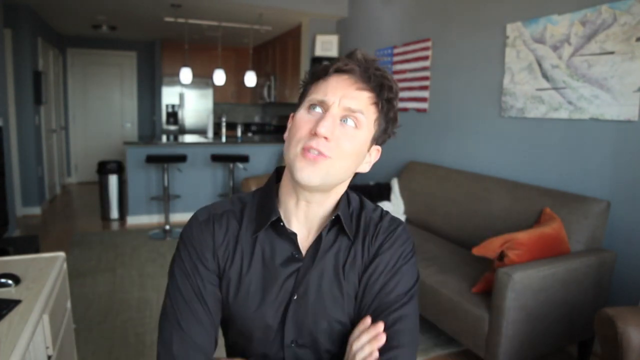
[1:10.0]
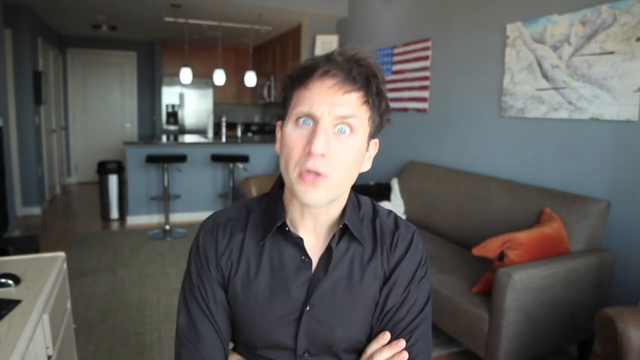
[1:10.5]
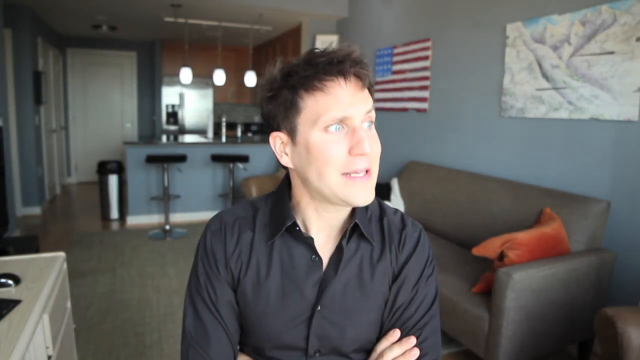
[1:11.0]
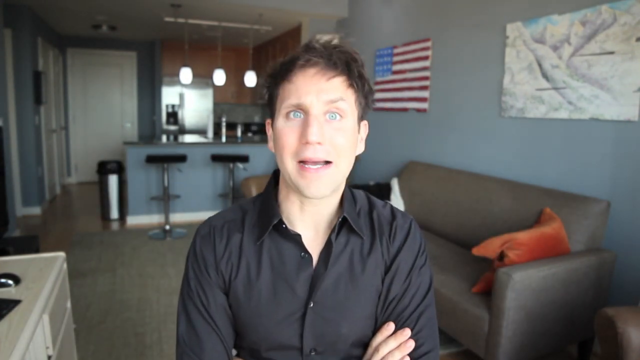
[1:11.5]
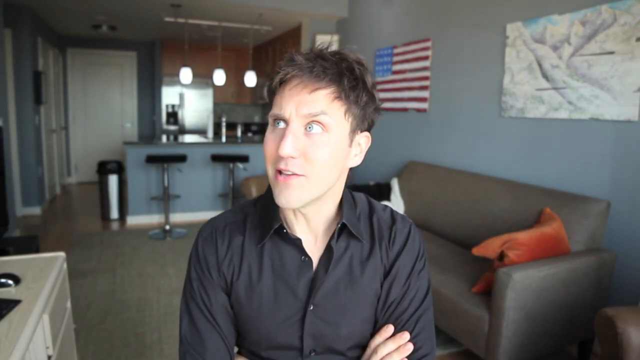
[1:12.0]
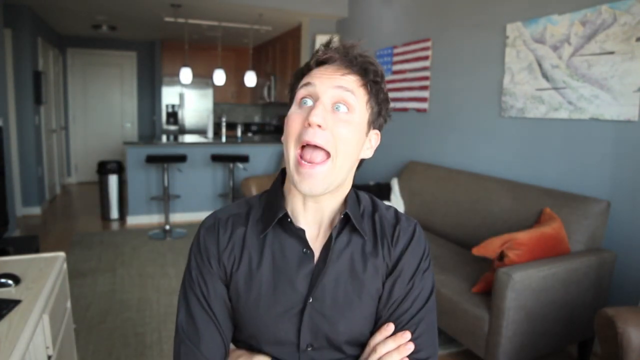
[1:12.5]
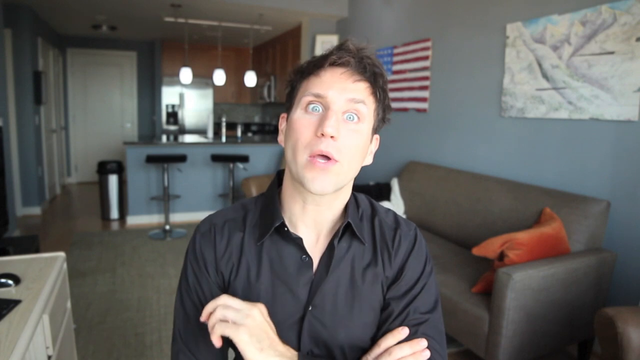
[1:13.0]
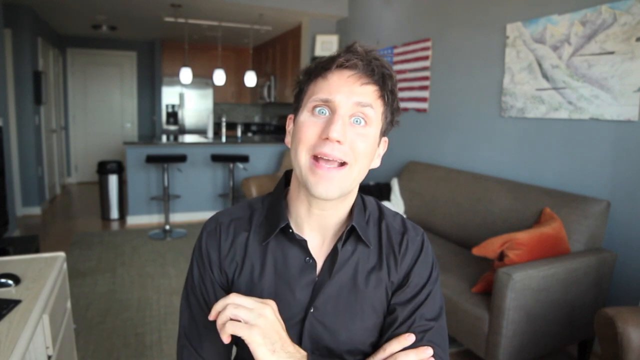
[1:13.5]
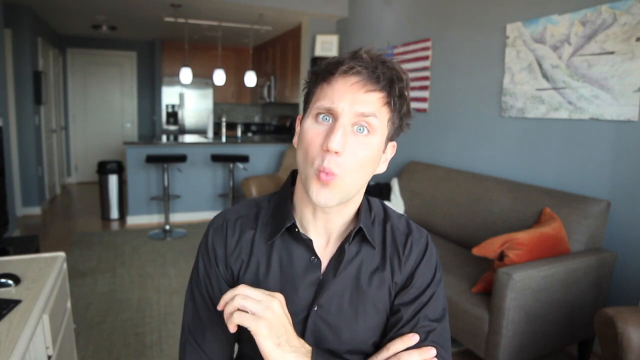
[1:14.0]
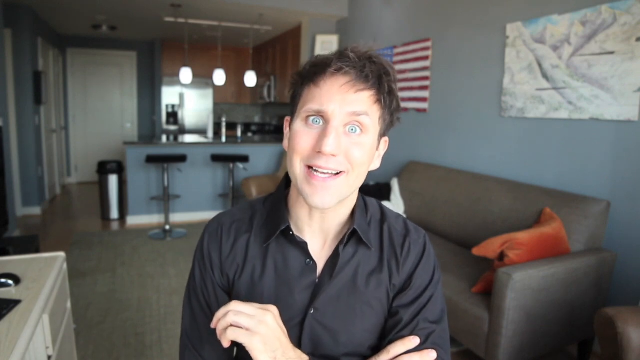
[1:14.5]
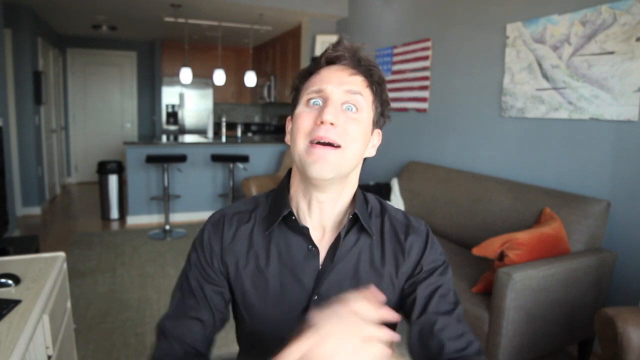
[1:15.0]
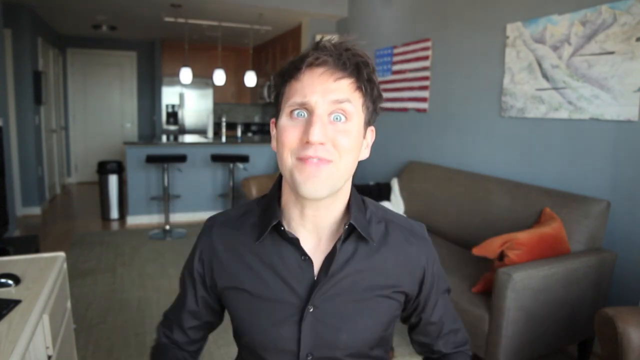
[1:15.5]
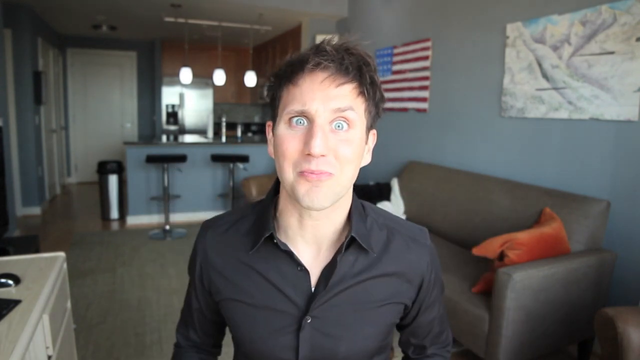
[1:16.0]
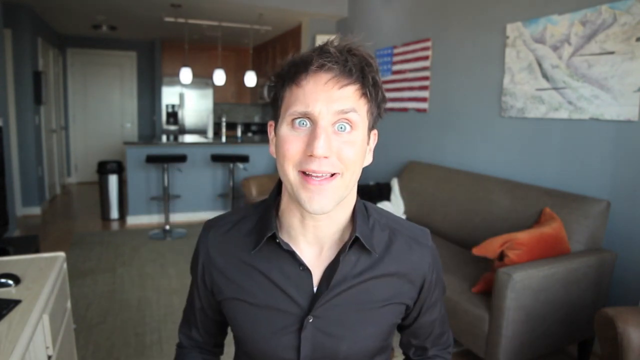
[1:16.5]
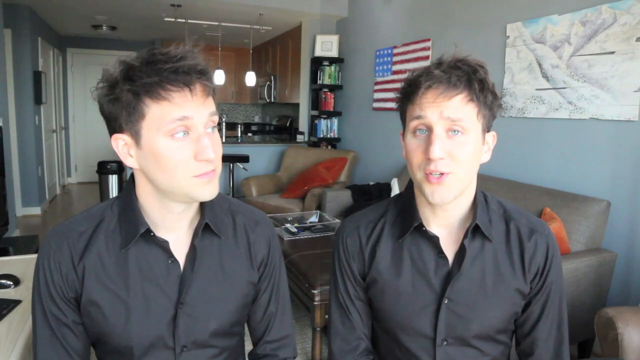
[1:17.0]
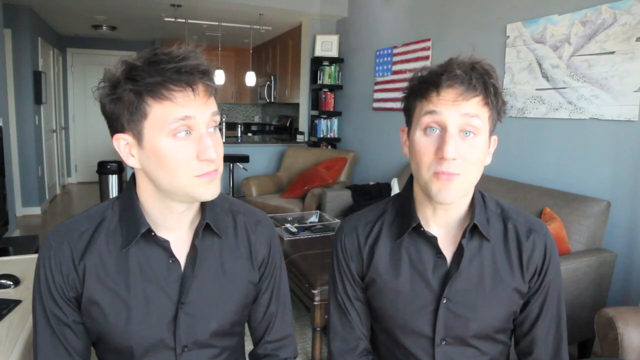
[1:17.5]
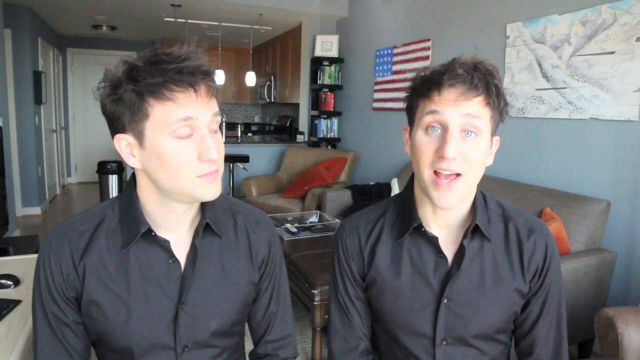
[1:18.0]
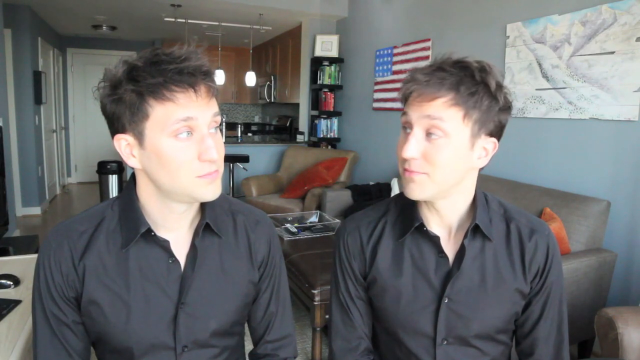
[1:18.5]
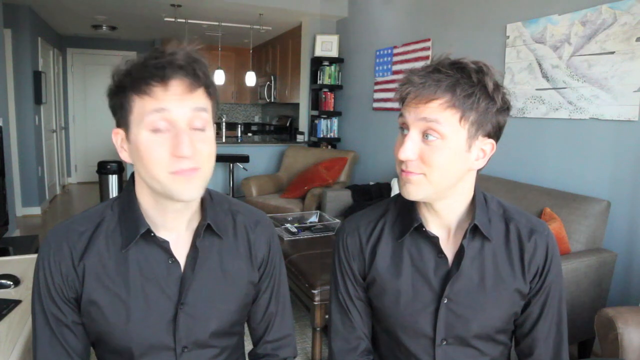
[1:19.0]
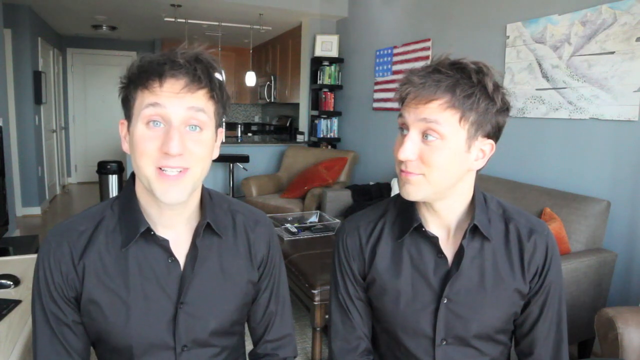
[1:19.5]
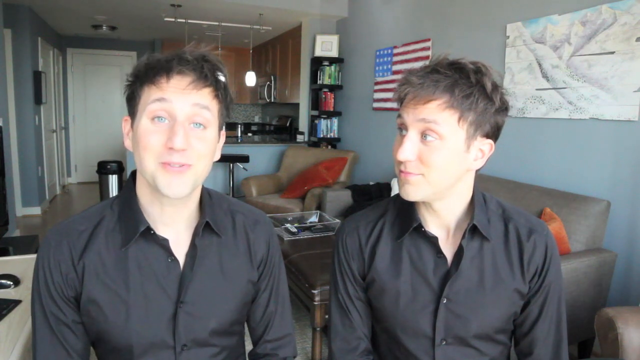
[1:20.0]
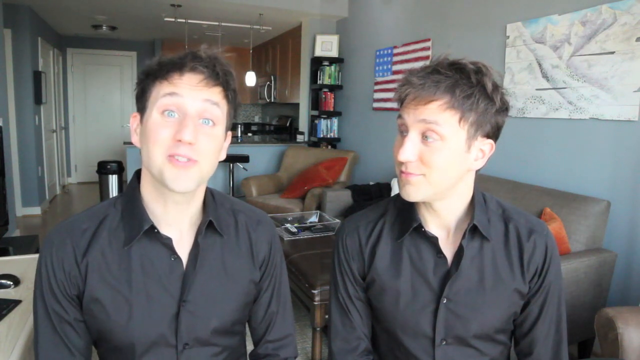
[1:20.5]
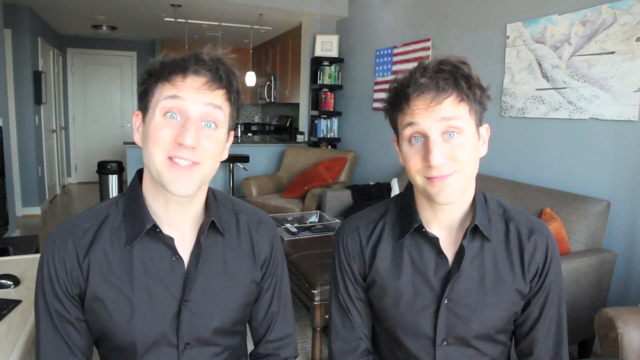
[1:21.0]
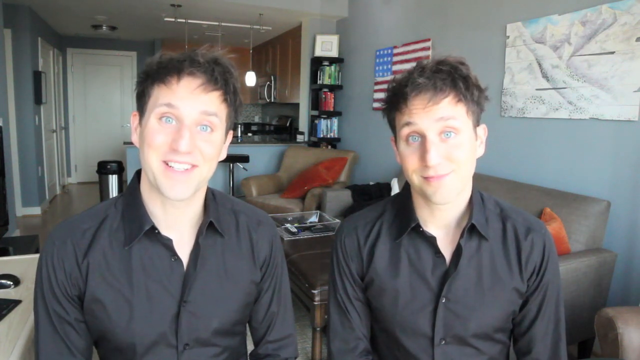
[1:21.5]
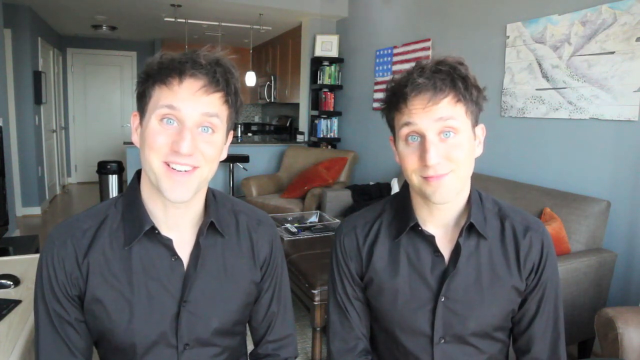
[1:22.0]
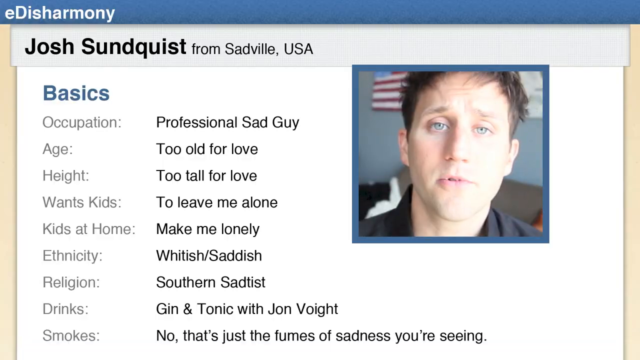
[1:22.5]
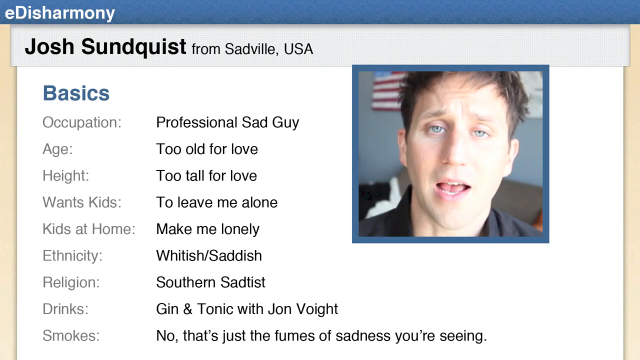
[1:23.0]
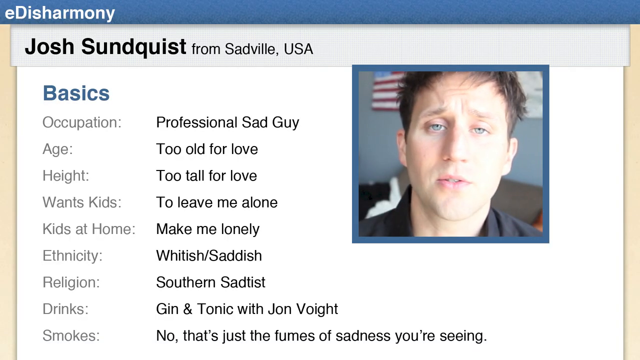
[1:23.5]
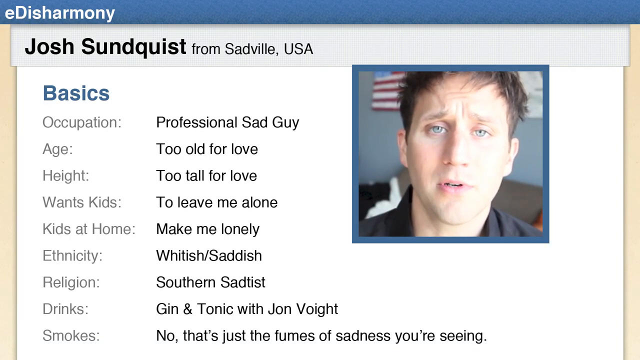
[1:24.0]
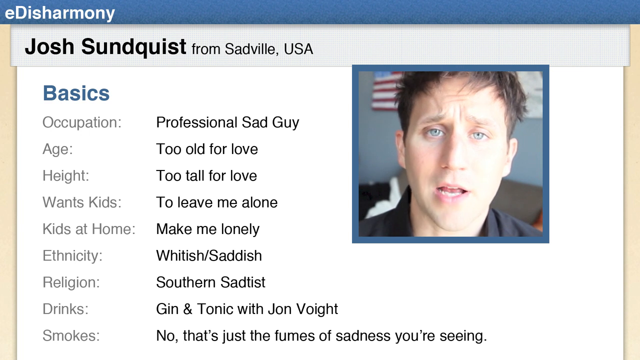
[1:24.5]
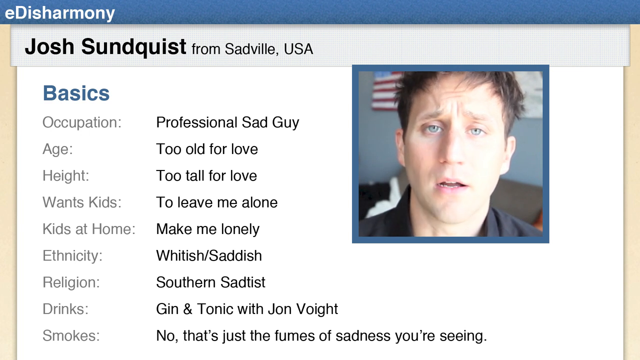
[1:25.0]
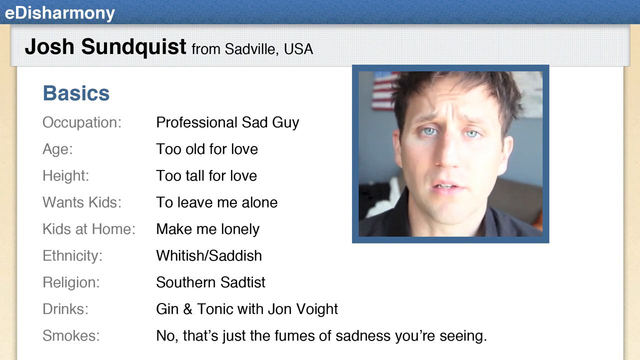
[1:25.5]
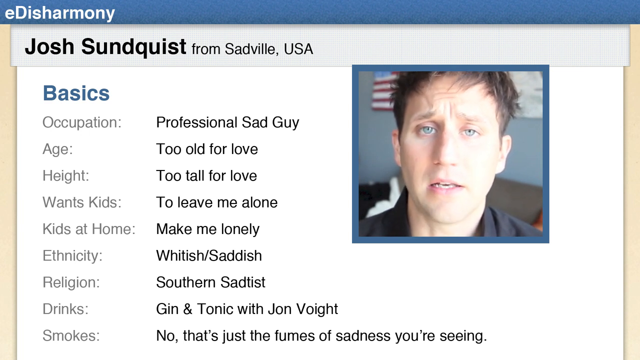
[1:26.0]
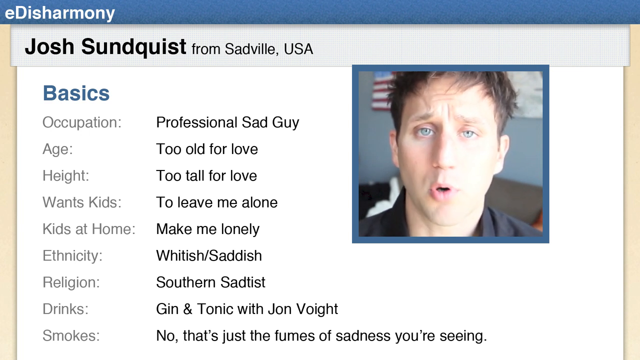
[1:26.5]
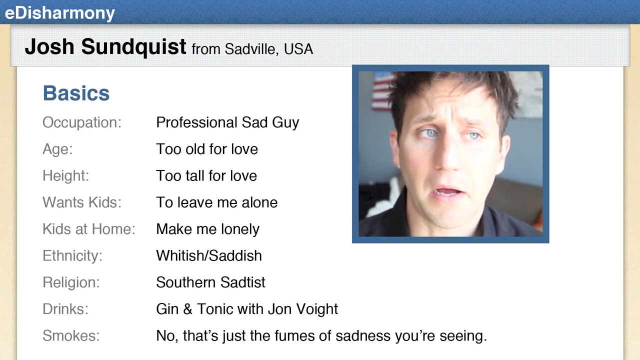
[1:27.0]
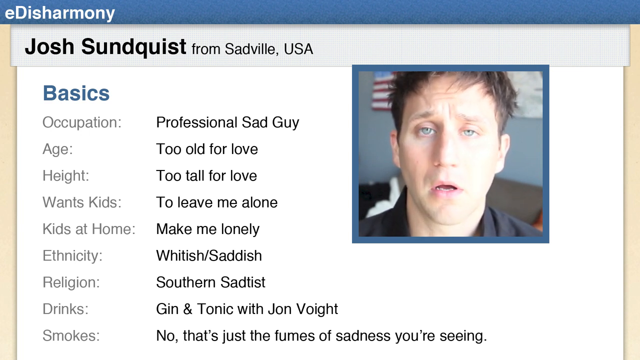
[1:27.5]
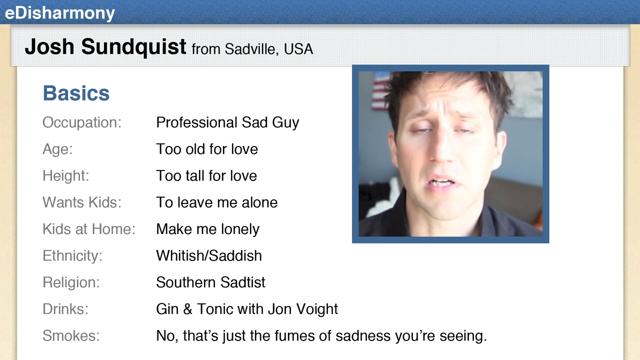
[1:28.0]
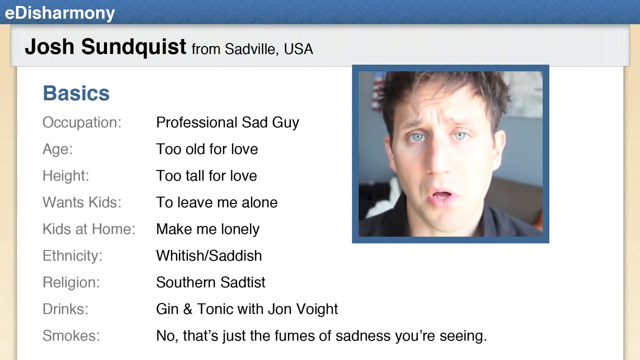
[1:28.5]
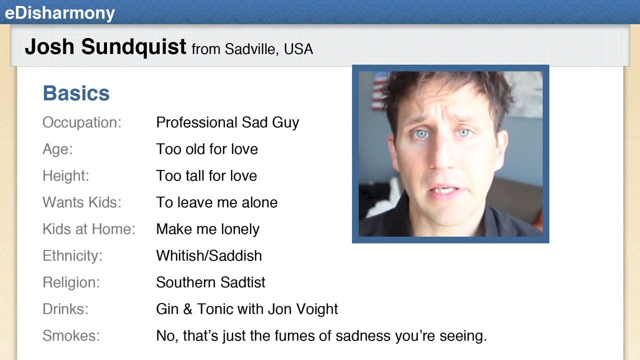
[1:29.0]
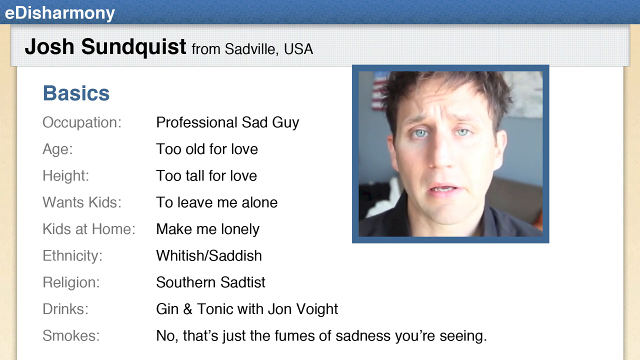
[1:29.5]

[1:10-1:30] A fairly young man somewhere in his 20s looks toward the left side of the screen, making various facial expressions as he tells a story; he seems very animated and gestures a lot. A duplicate of him appears on screen, so he is apparently talking to himself through a duplication video effect. A profile page is then shown with his name, John Sundquist, from Sadville, USA, and basic demographic information below: occupation "professional sad guy", age "too old for love", height "too tall for love", wants kids "leave me alone", kids at home "makes me lonely", ethnicity "white-ish, sad-ish", religion "Southern sad-tist", and drinks "gin and tonic with Jon Voight". Below that is a smokes section.